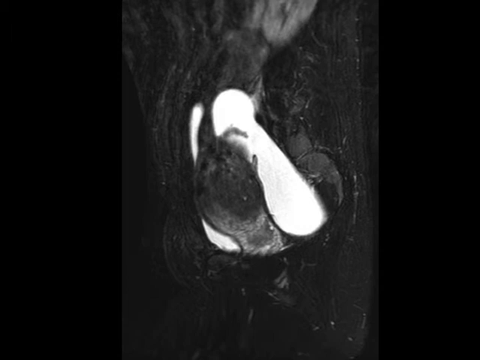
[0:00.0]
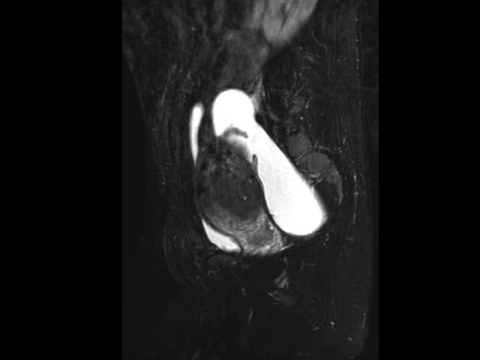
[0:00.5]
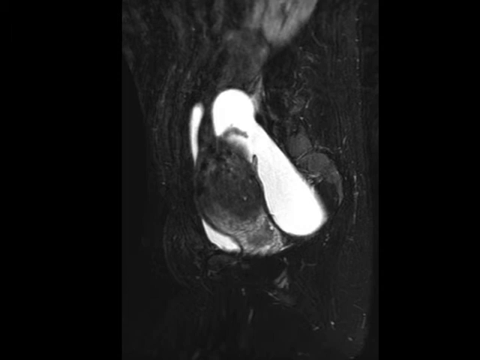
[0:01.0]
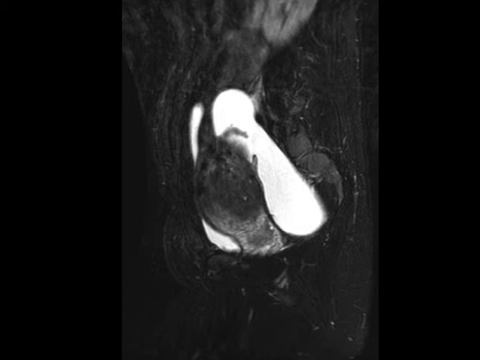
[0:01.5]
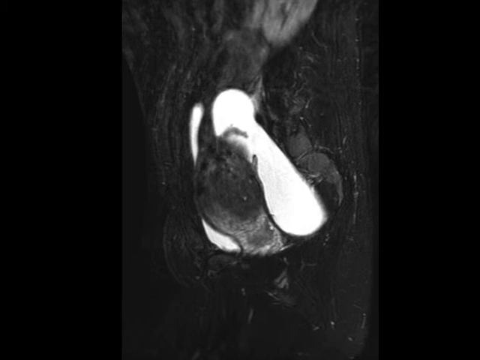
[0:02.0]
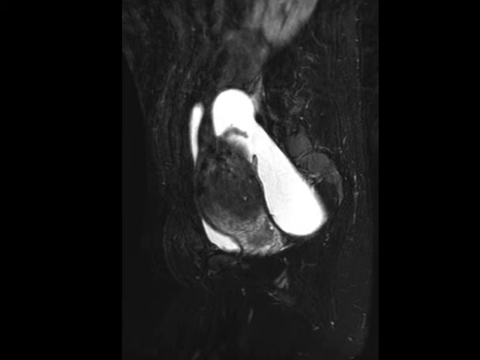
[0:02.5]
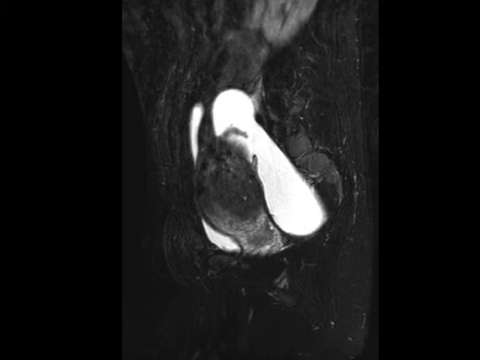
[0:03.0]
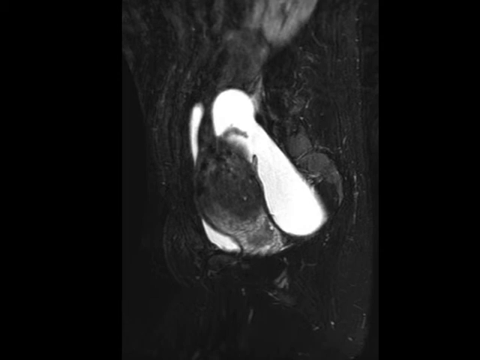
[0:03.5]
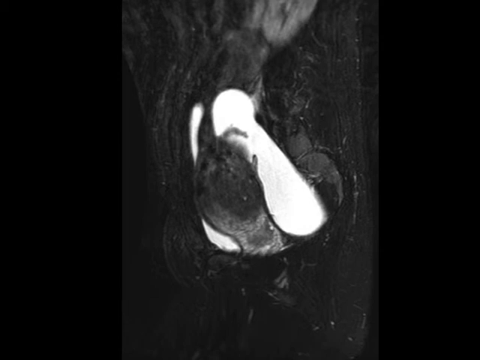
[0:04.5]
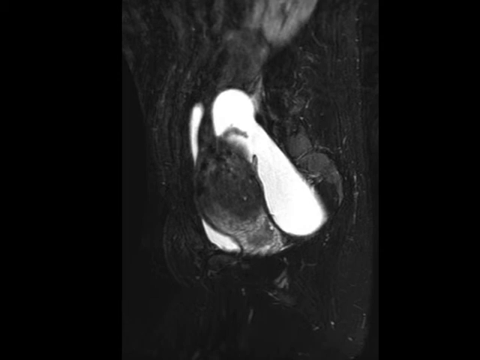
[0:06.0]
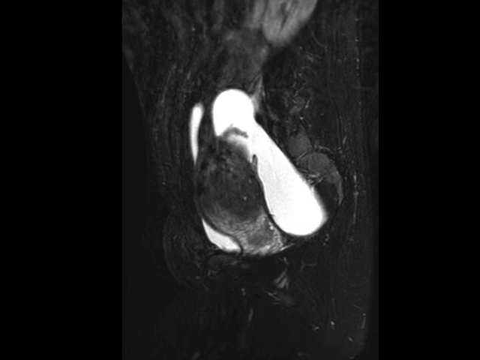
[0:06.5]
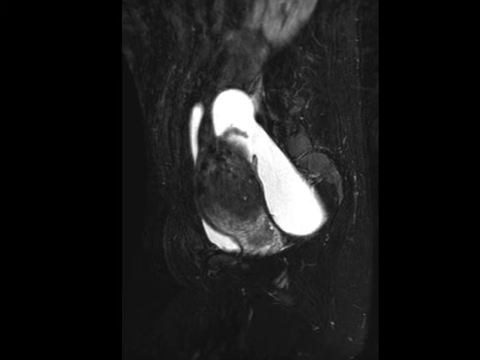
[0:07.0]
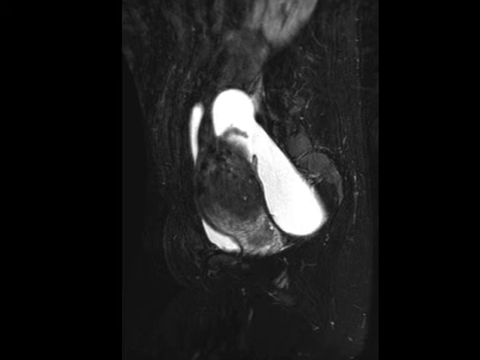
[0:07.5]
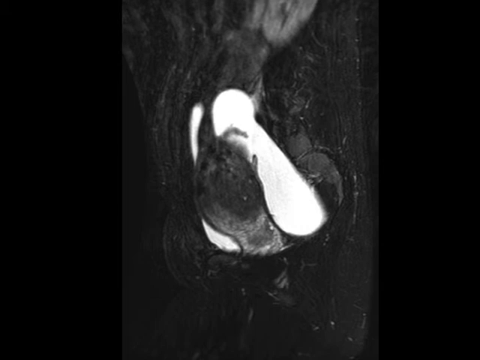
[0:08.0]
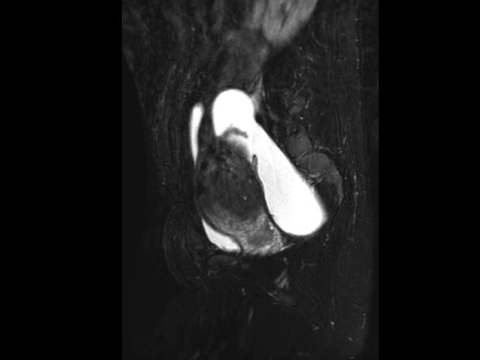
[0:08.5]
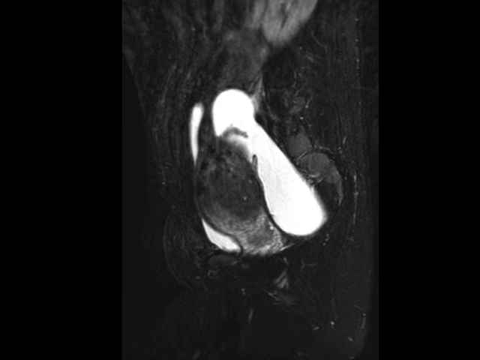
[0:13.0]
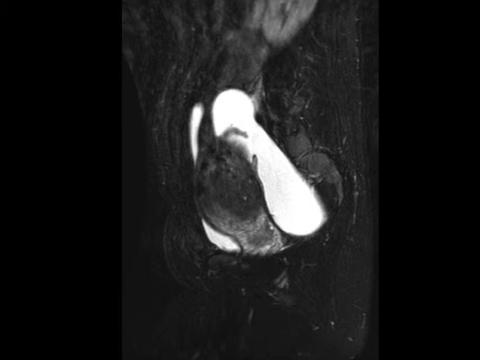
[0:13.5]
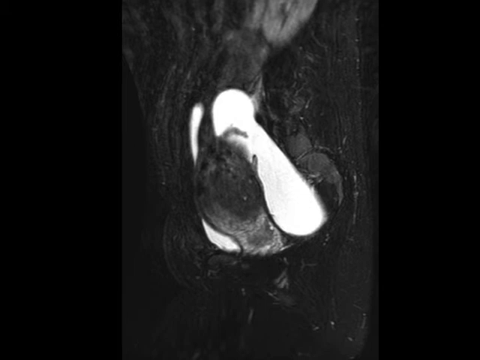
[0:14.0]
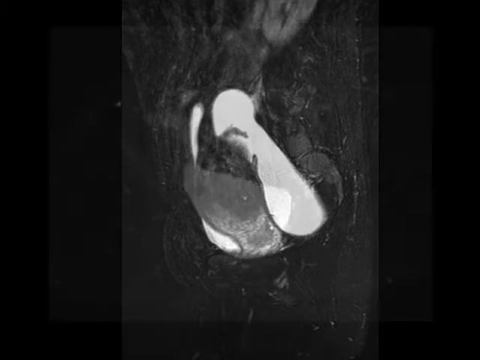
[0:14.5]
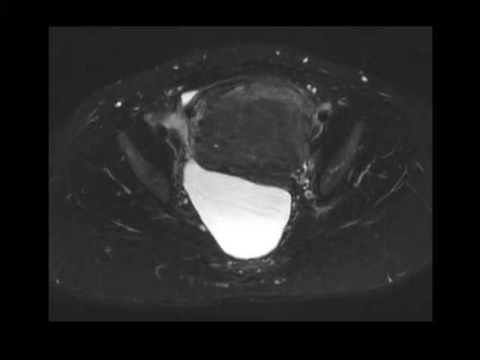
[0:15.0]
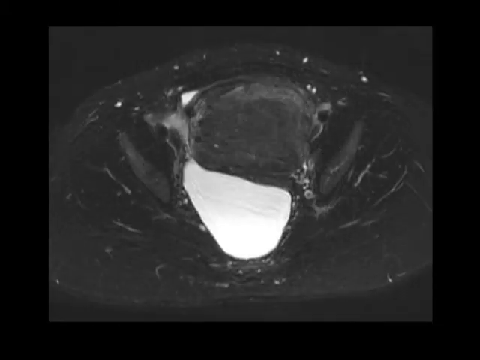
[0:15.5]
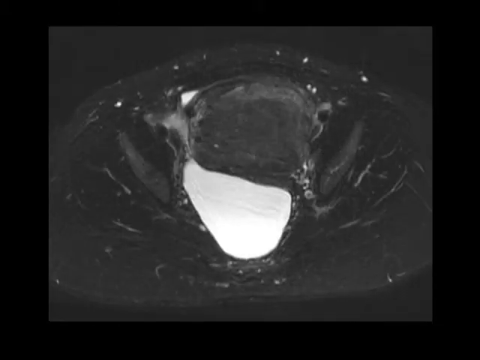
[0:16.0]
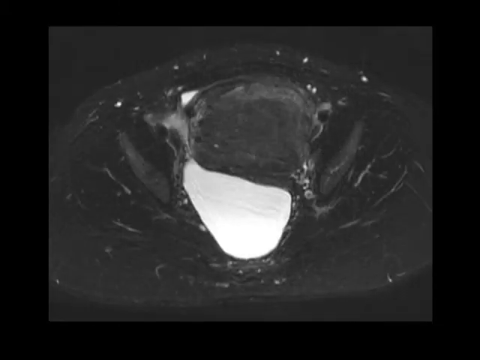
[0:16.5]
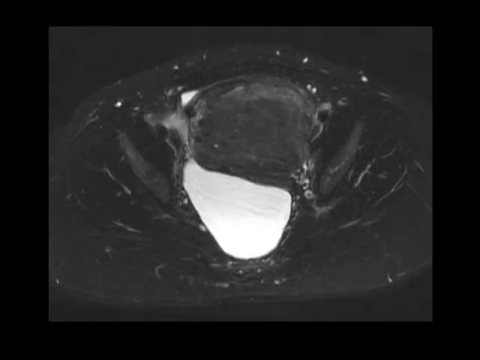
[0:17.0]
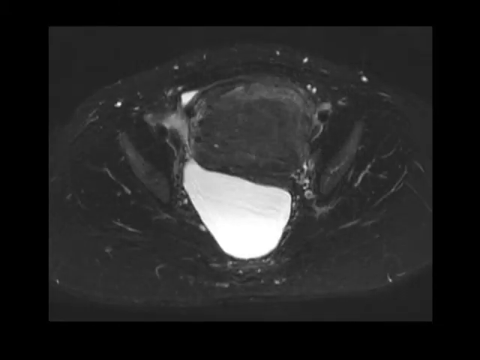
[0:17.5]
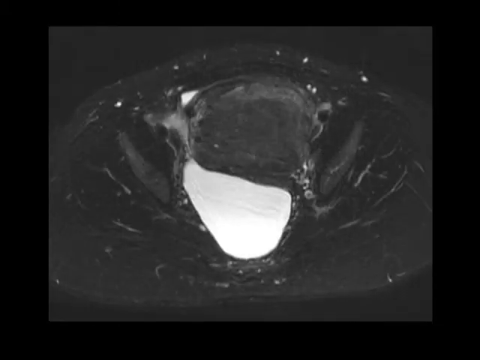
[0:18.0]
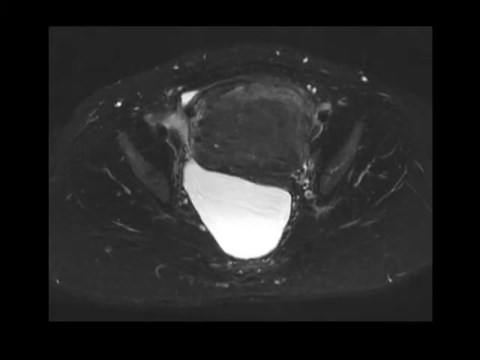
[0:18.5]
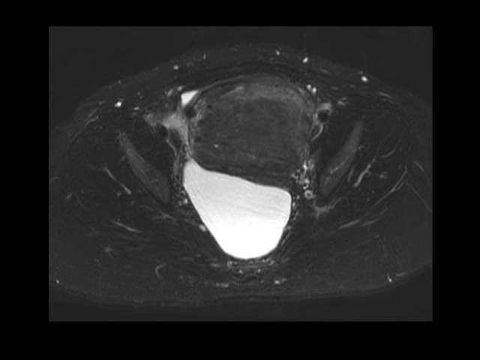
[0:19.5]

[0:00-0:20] An x-ray image is shown. It is dark black on both sides about a fourth of the way in, and then there is gray in different shades. The view looks down onto the object, which looks like it could be a knee. There is white around the center of the knee. The x-ray has a large dark area in the middle with lighter gray around it, almost in the shape of a bulb. The white area around it is greater at the upper right side. Two small gray objects are on top of the white area, and a small gray object comes from the middle to the top. There is barely visible white on the left side, very small at the top and larger at the bottom. A second x-ray also looks down on the object: at the top is the same dark area seen from the front, the larger white area toward the bottom is the white that was on the right side of the previous x-ray, and the small white area on the left is also present, with a few grainy white specks.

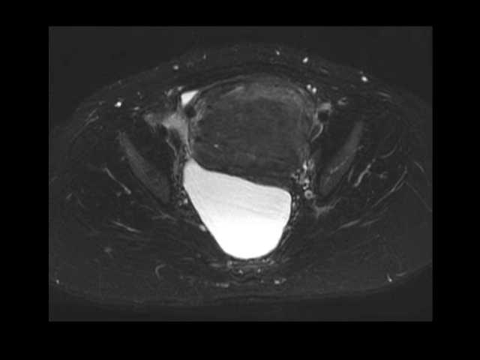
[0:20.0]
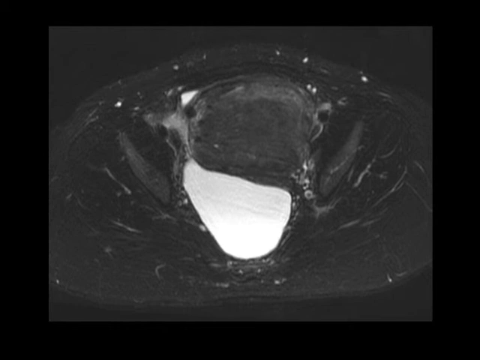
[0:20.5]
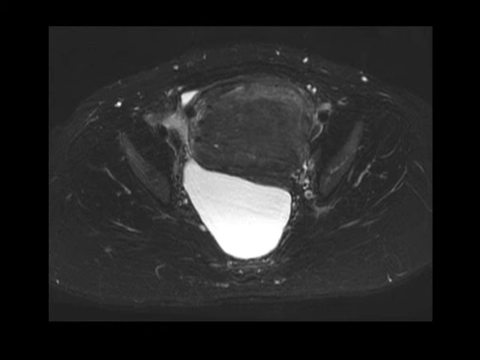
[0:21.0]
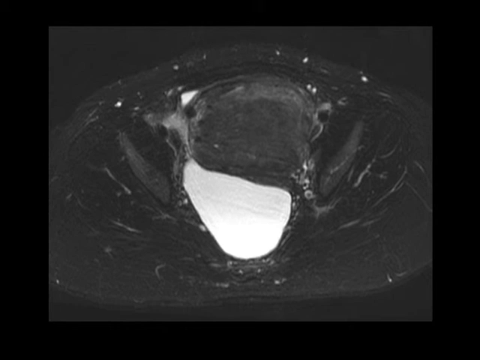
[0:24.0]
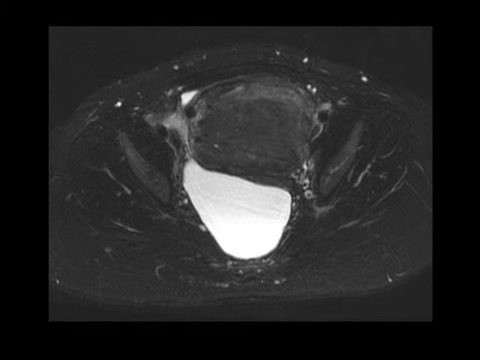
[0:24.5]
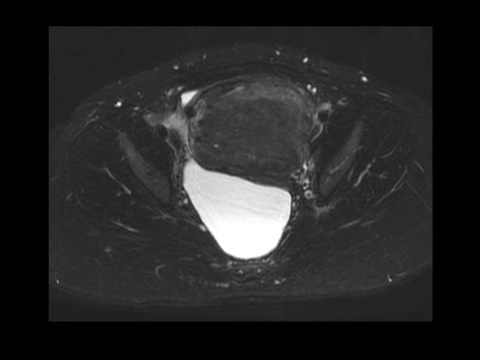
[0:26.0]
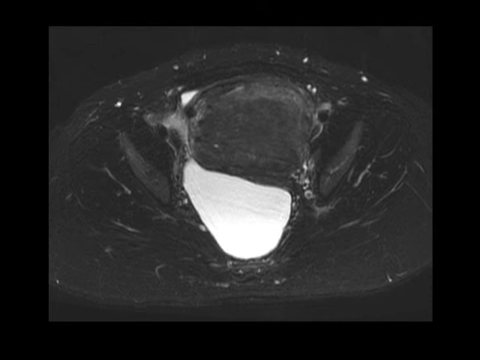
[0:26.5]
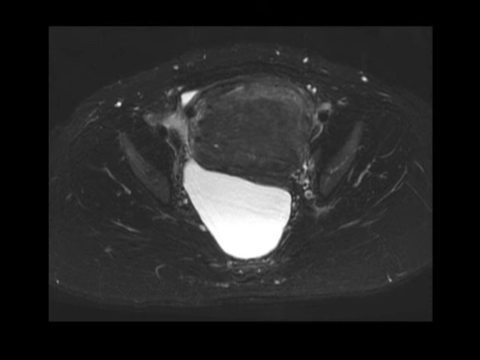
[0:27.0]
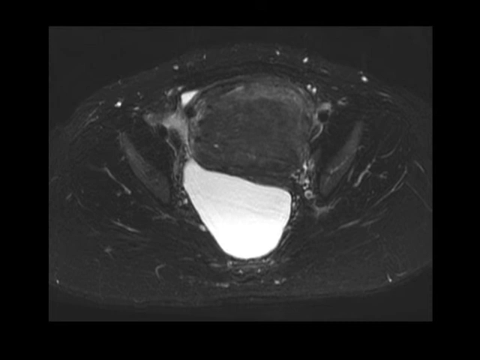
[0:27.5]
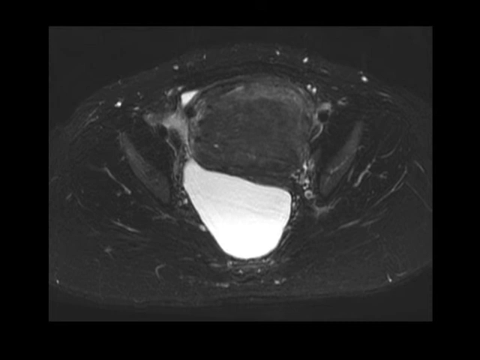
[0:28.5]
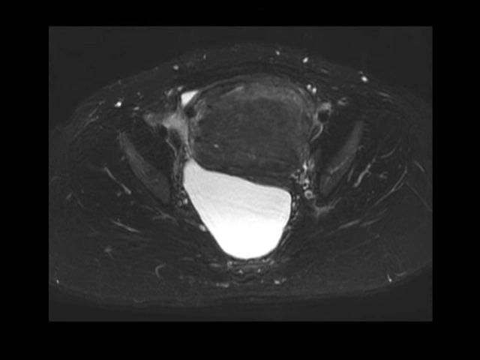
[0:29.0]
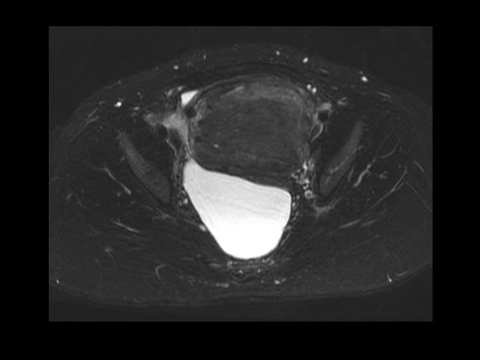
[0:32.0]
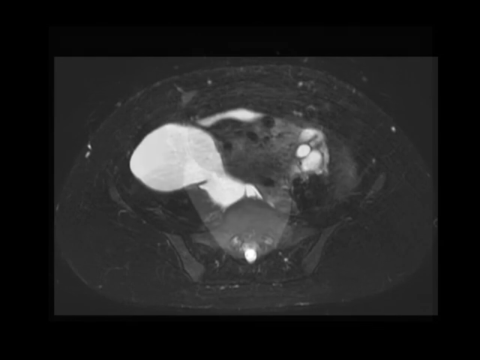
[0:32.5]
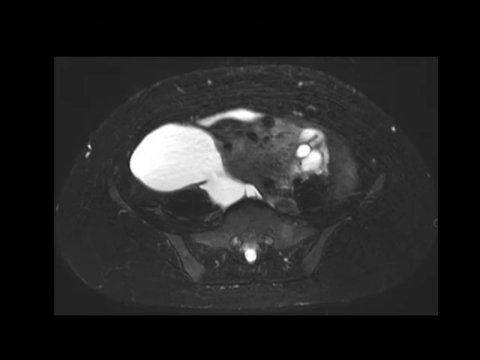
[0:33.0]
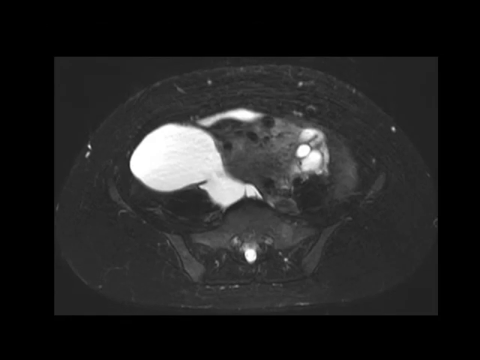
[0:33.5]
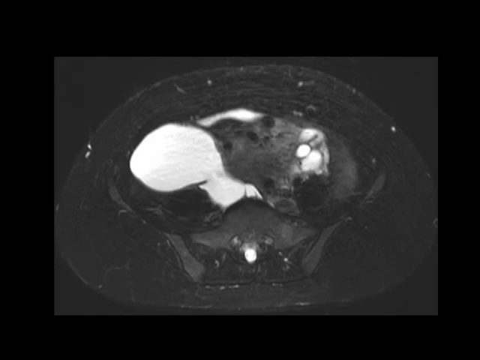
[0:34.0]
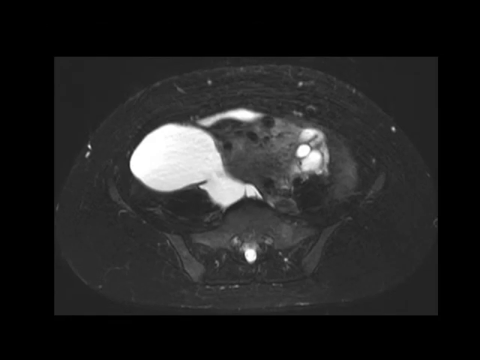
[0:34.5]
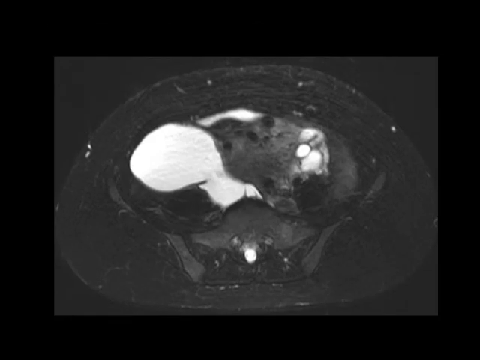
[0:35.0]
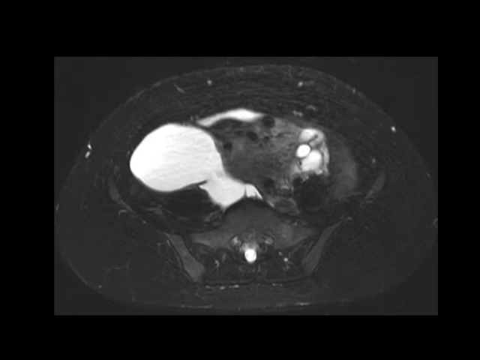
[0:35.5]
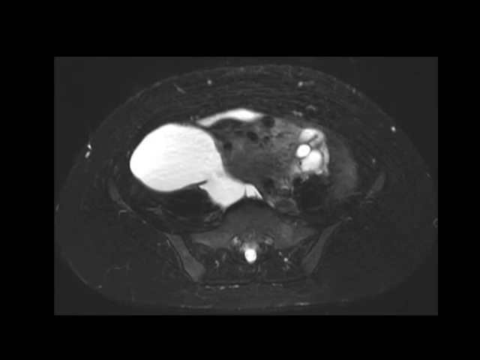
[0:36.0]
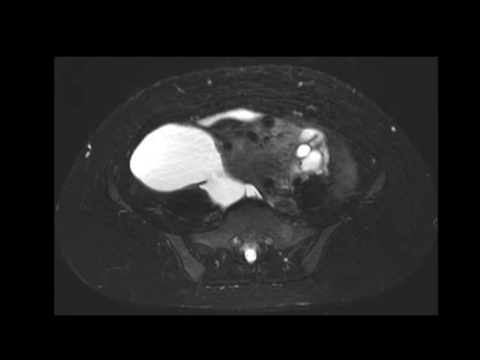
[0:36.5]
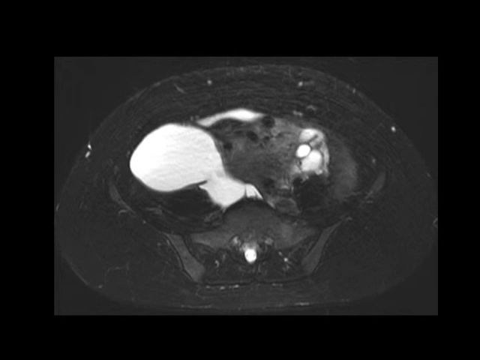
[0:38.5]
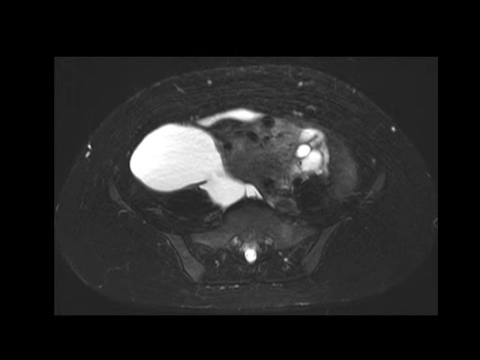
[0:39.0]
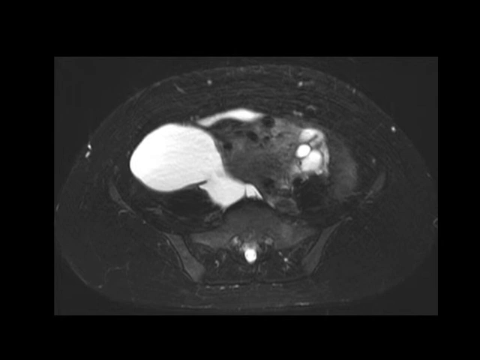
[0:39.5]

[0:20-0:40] The top of the x-ray is seen as if looking down onto the object. There is a white grainy speck, and striations come out from the middle on each side. The next x-ray almost doesn't look like a knee anymore; it seems to have more white, with a large white bulb-type area coming from the middle up toward the left. In the upper right corner is a little blob: little round oval circles of white surrounding a gray mass that has specks of black on it. Around the outside is a blurred gray shadow. This is set on a lighter gray background, which is set on a black background with about a fourth of an inch of black around it. The gray in the center is the x-ray itself, and the object is slightly off at the bottom, the sides and the top. There are multiple little white grainy areas in this part. Then a second part shows striations: an oval x-ray with a large white area.